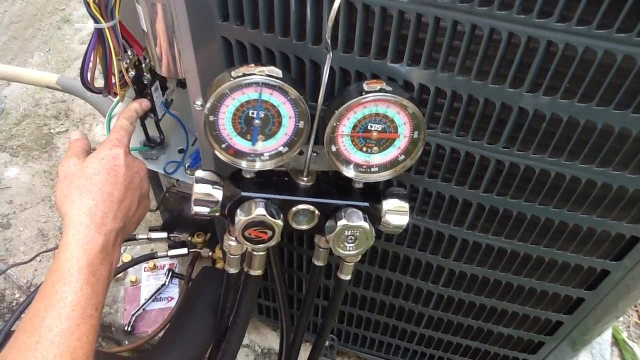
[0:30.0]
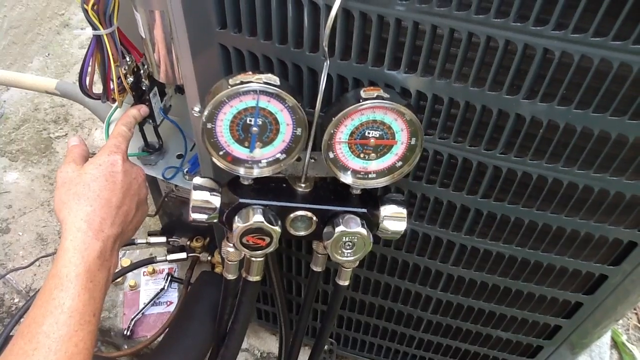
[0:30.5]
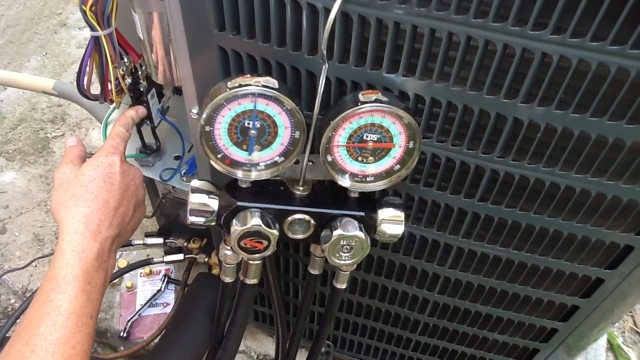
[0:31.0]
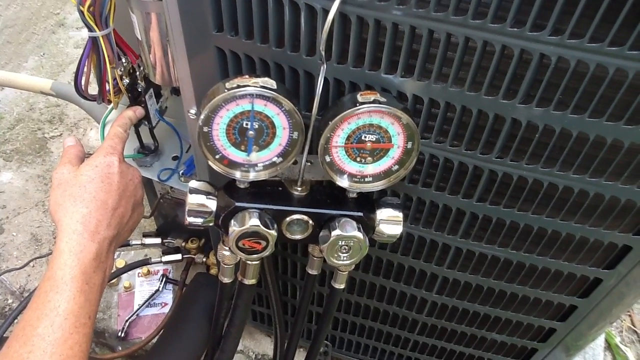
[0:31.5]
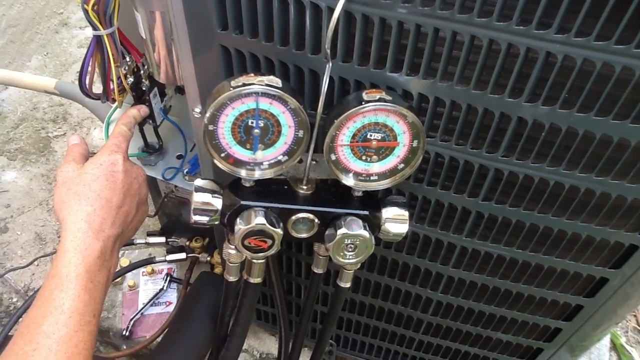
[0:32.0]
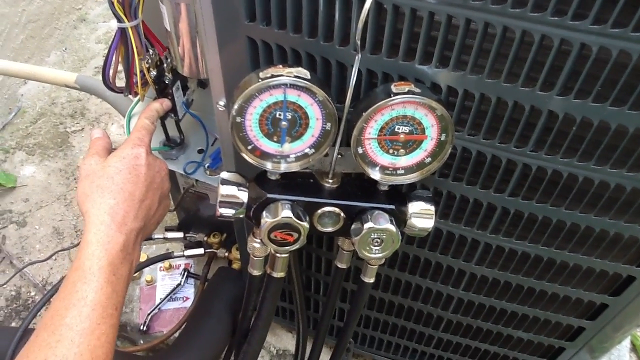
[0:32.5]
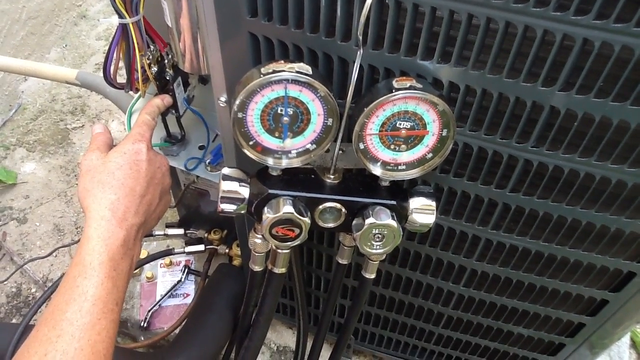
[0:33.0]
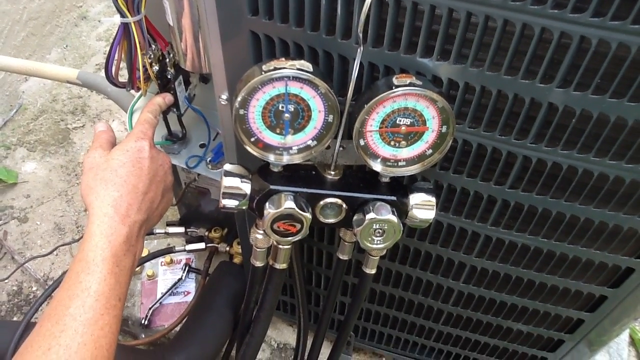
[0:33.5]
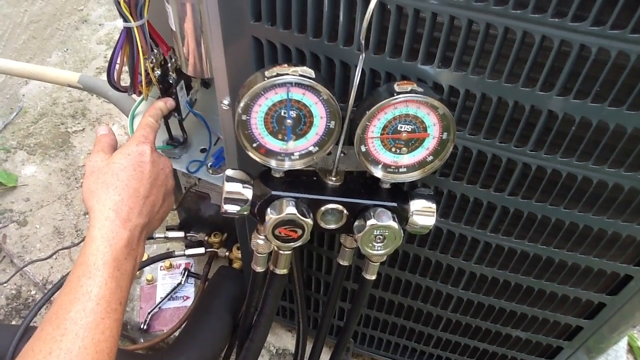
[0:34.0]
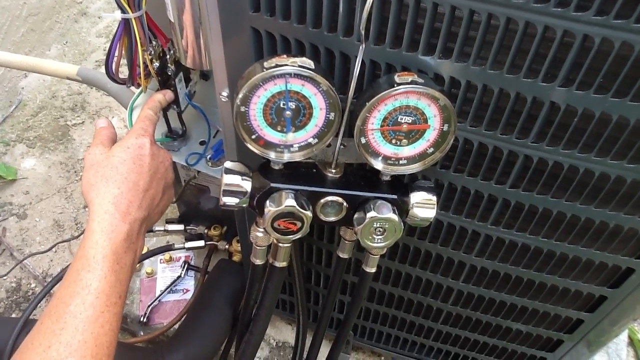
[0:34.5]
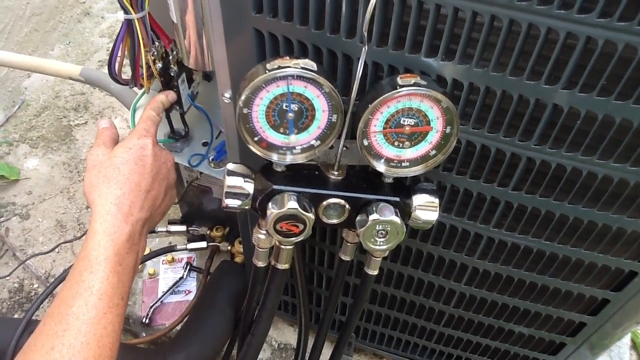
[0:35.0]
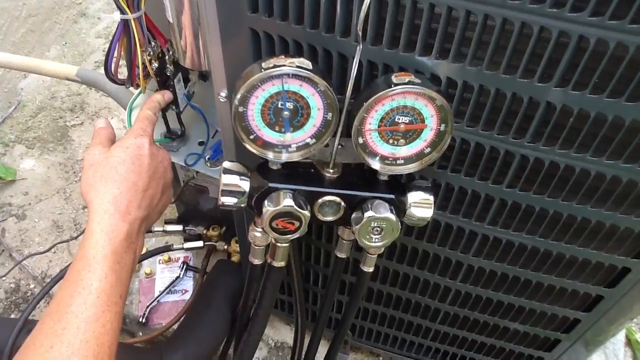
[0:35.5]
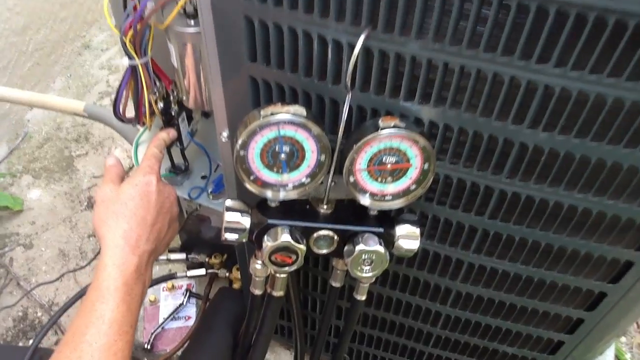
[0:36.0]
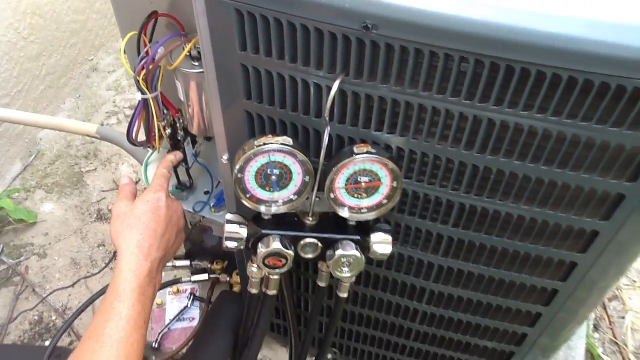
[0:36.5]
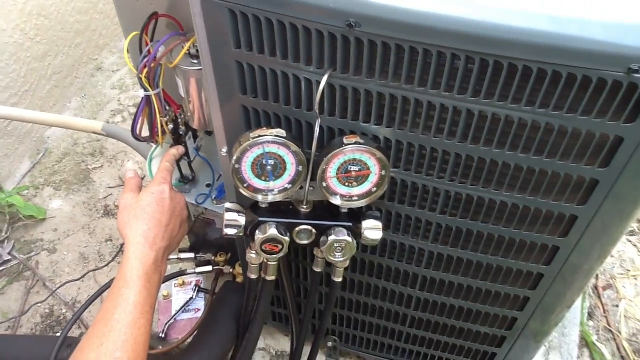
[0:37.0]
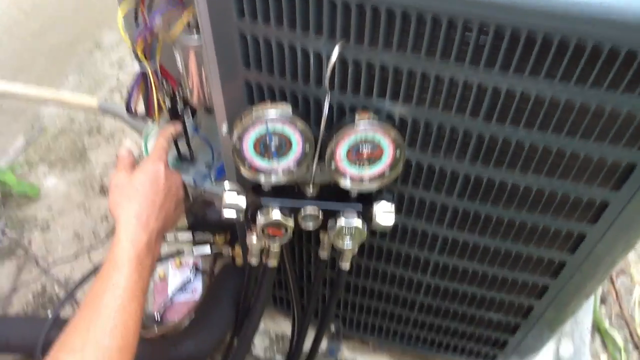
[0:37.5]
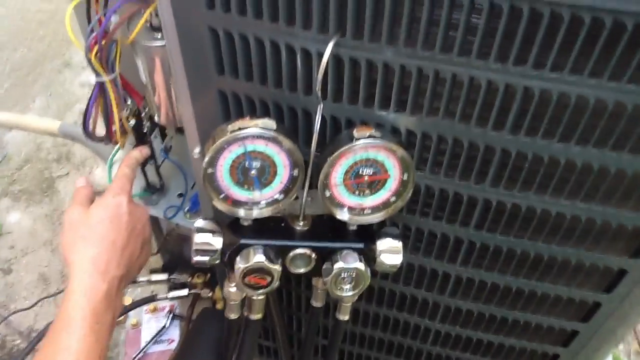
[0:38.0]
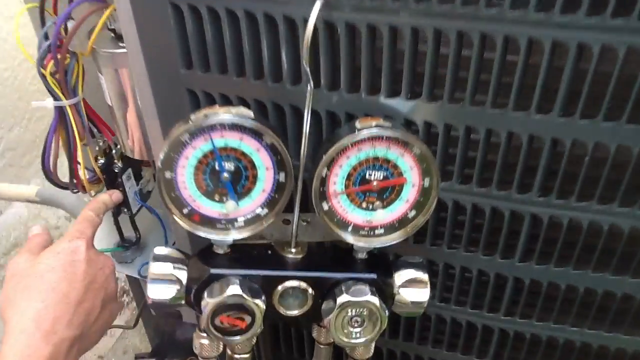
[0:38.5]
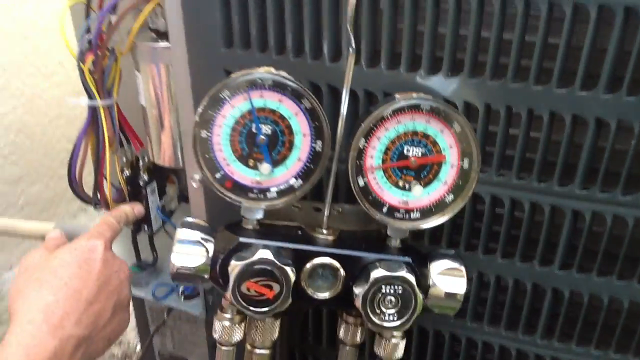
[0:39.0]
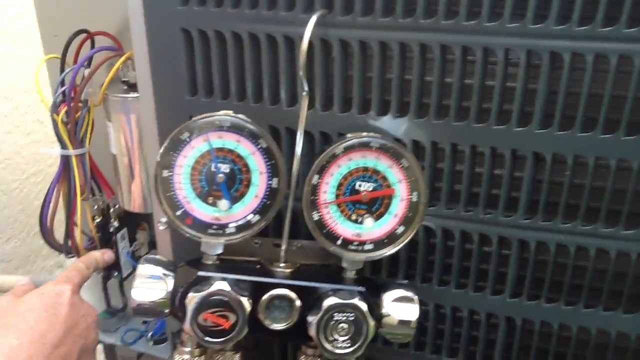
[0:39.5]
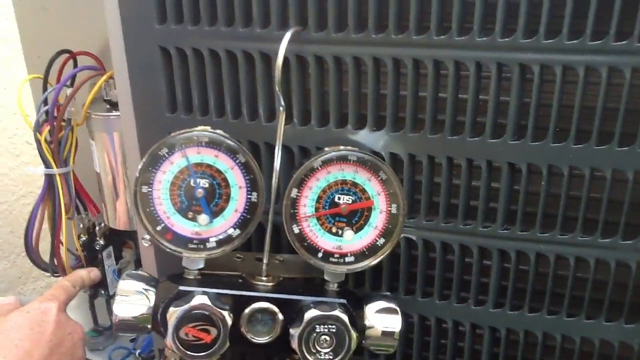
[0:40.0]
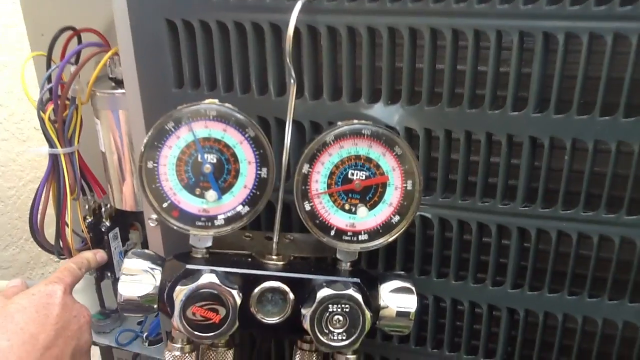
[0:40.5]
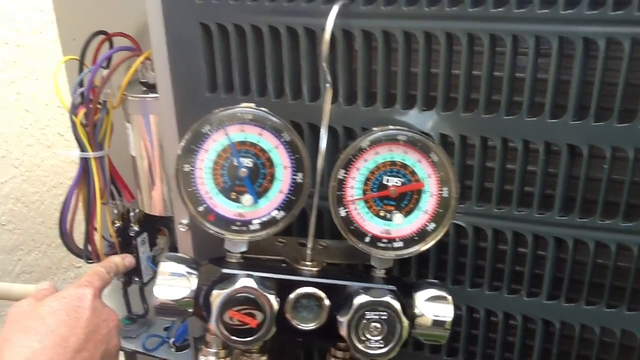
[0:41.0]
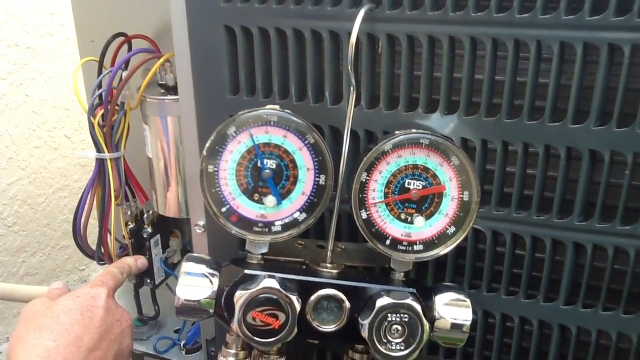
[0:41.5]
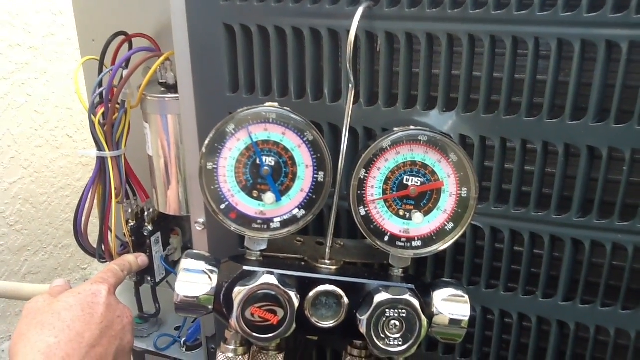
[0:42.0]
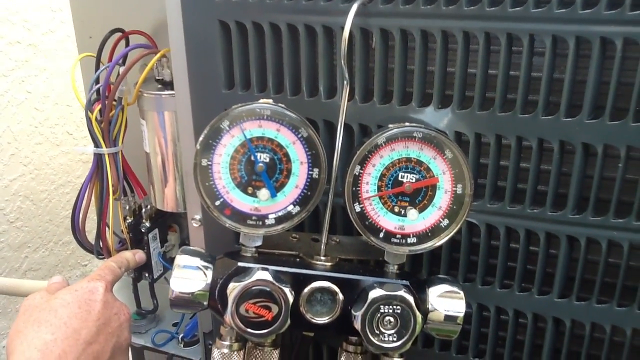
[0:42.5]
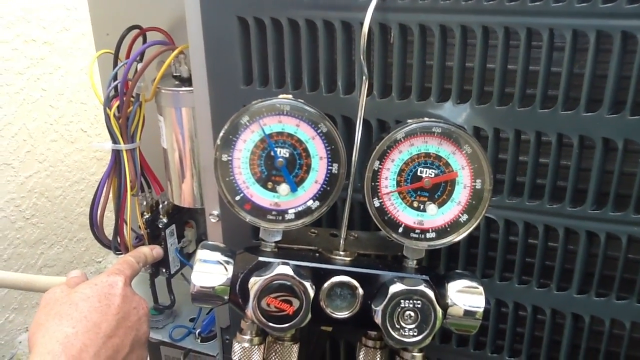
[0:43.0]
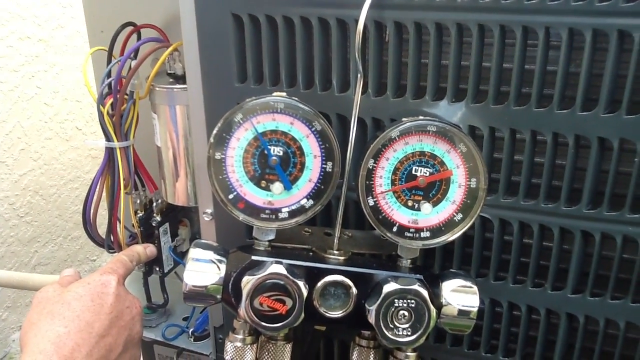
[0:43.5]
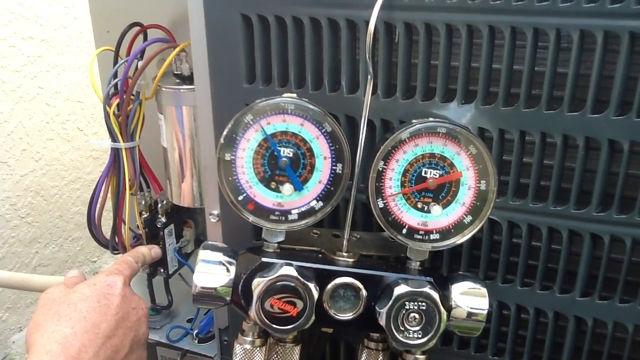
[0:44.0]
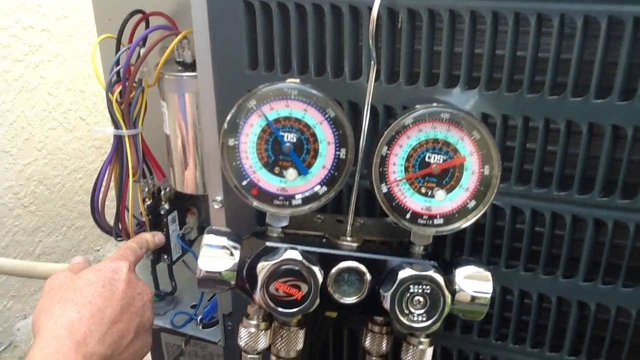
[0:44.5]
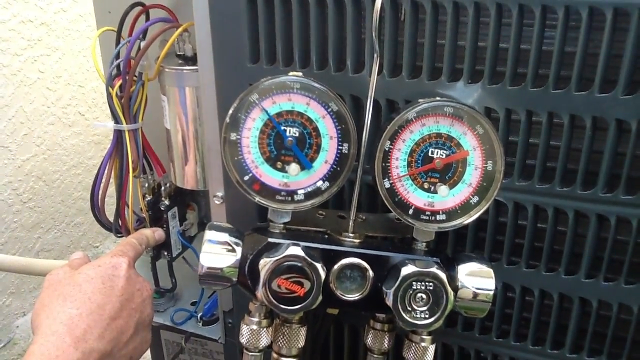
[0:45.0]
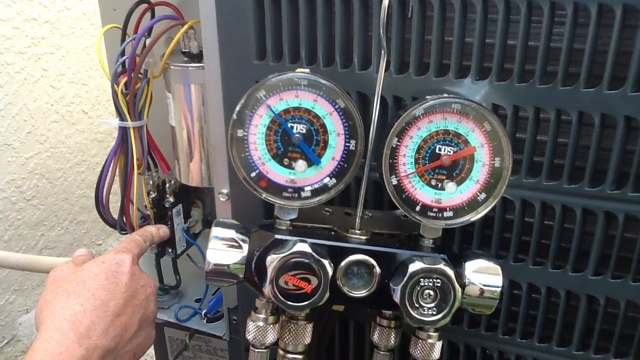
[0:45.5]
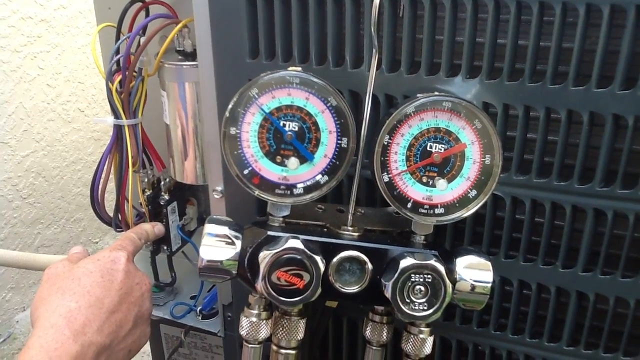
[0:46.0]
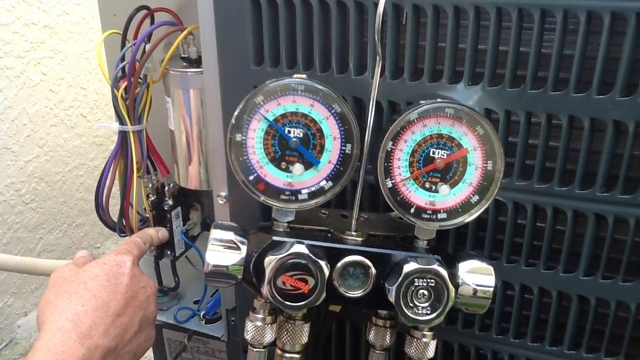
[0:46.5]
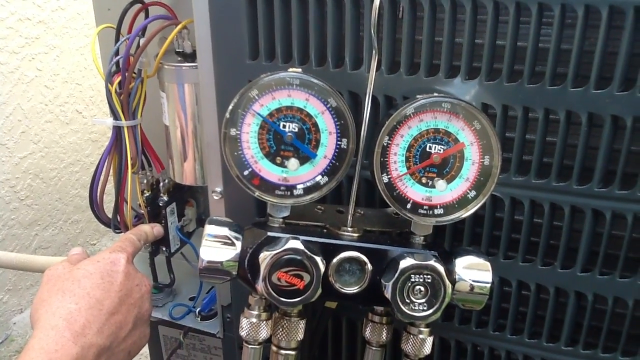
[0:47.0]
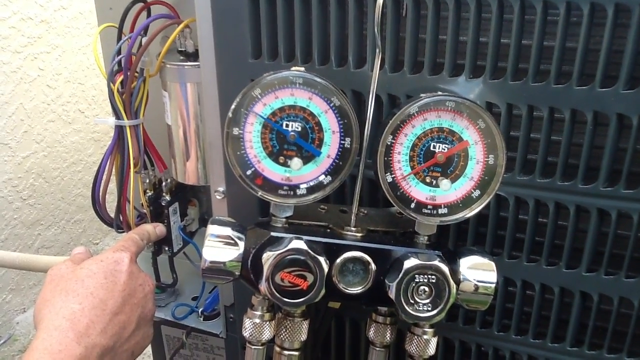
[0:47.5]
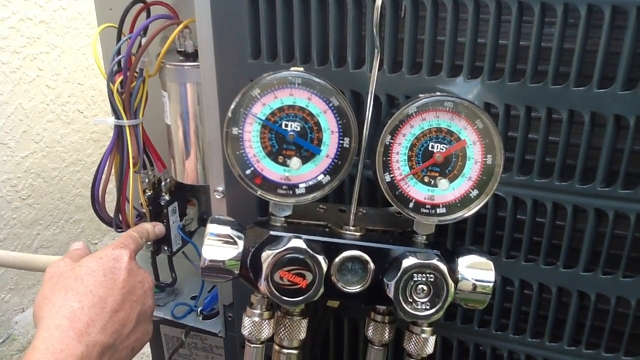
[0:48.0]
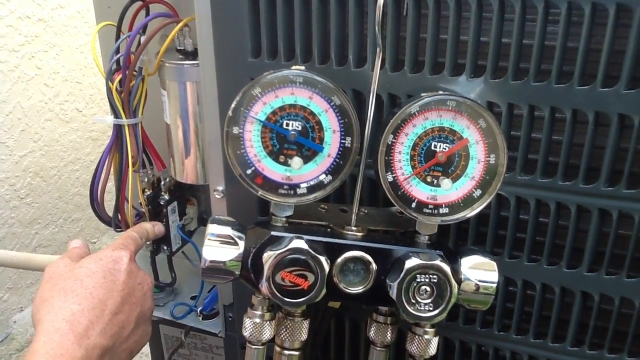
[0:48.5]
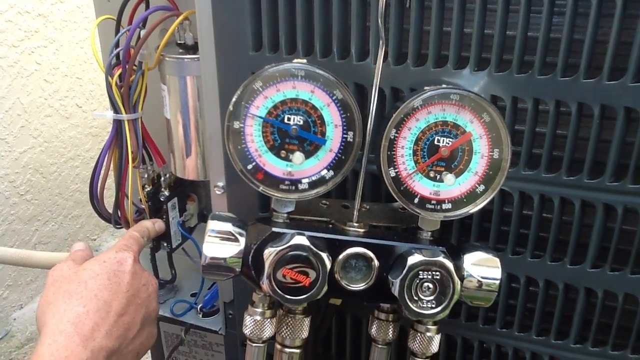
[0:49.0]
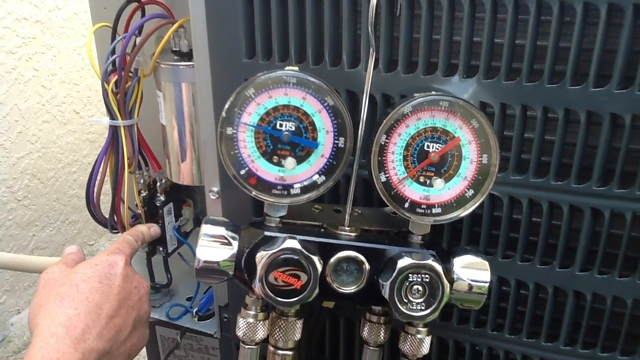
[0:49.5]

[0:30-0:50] The side of an HVAC unit has a big vent, and the front piece appears to be taken off so the electrical wires inside are visible. A man's right index finger touches something inside, as if holding it down. A gauging device hangs by a hanger; it has two circular gauges, apparently for gauging the amount of Freon or some gas being inserted. Black tubes running from its bottom into the machine have knobs that turn them on and off, maybe for the gas being put in. The ground in front of the machine is shown, and another pipe, like a PVC pipe, comes out of the side and goes away from the camera in the upper left, possibly a water drain pipe. The view cuts back to the man's index finger, as if he is holding down a button, maybe allowing the gas into the machine.